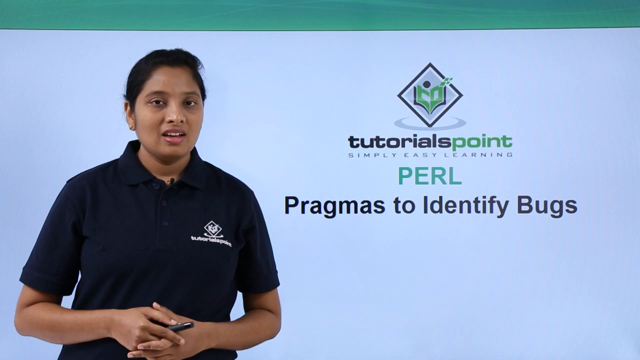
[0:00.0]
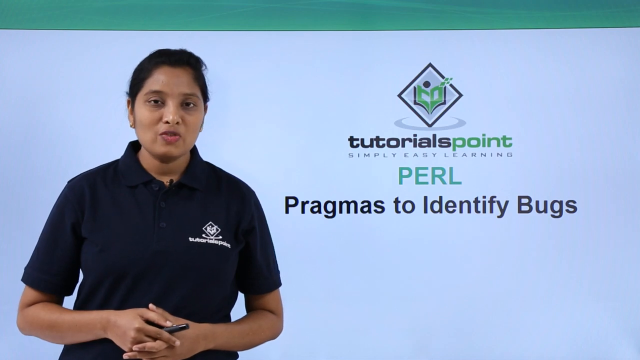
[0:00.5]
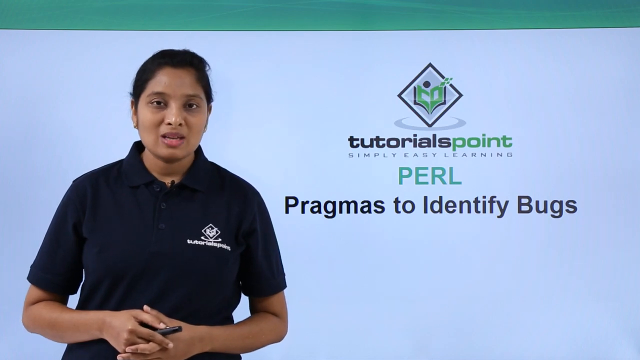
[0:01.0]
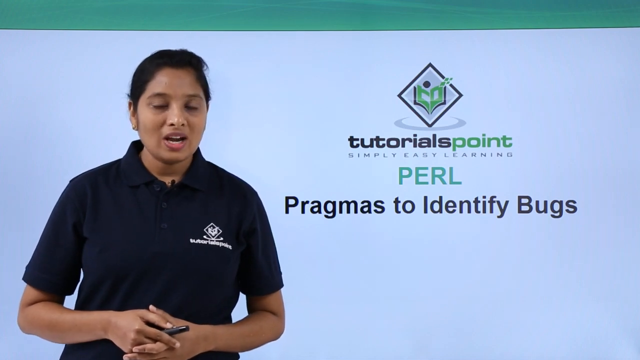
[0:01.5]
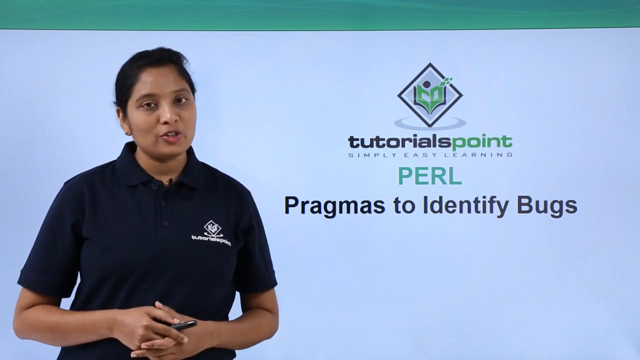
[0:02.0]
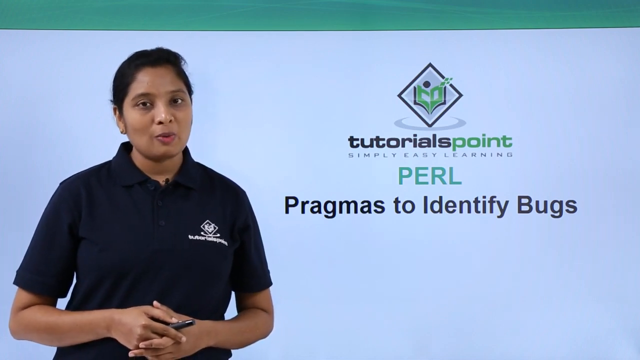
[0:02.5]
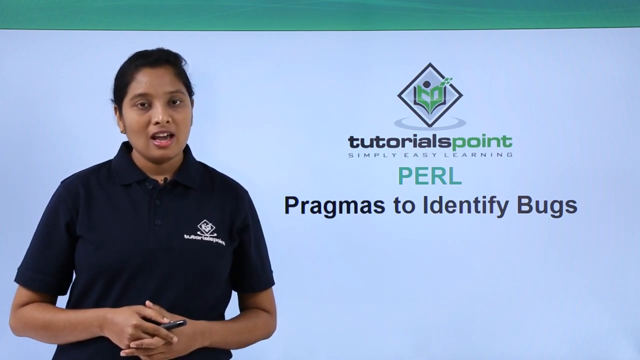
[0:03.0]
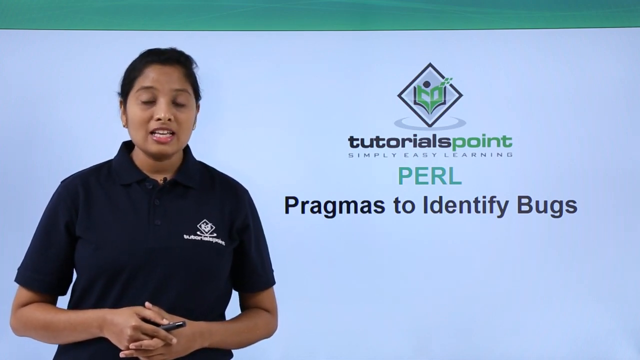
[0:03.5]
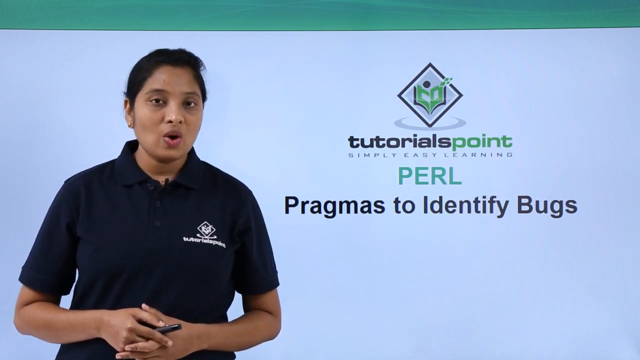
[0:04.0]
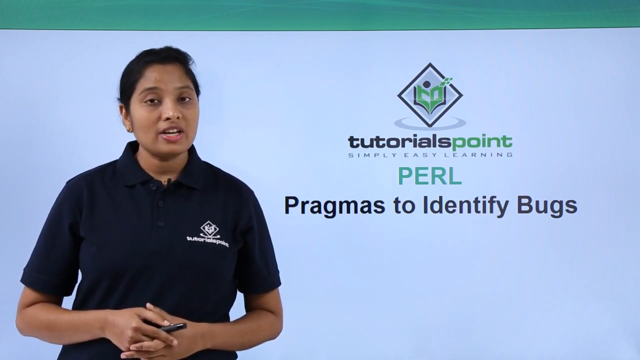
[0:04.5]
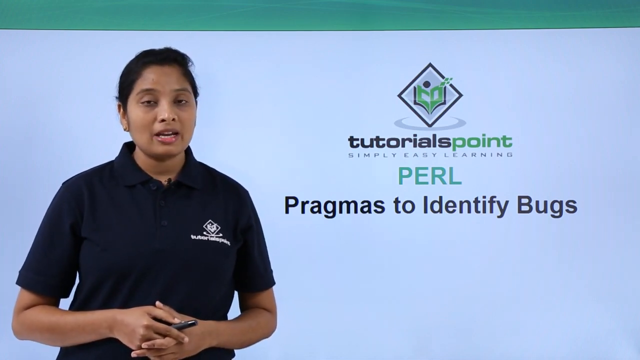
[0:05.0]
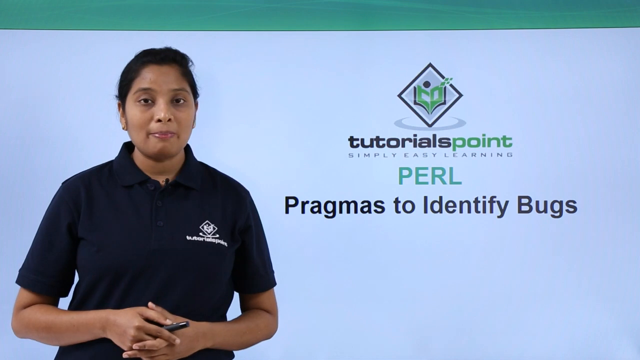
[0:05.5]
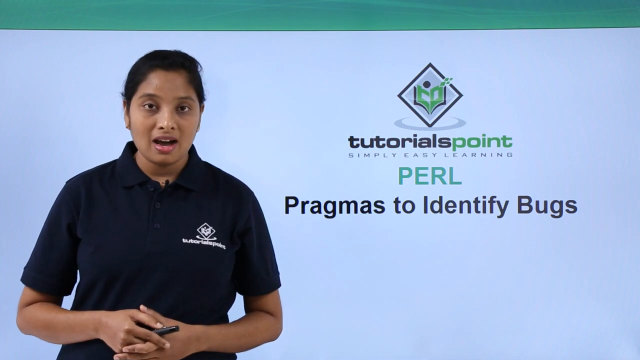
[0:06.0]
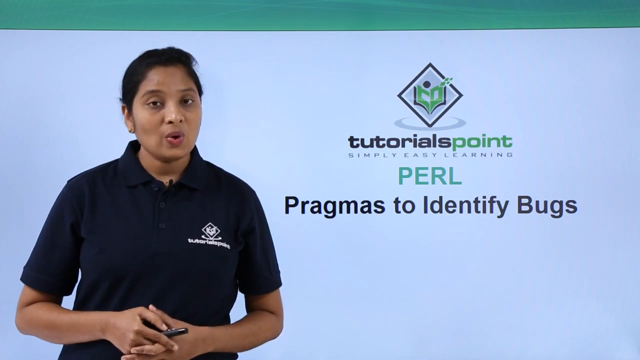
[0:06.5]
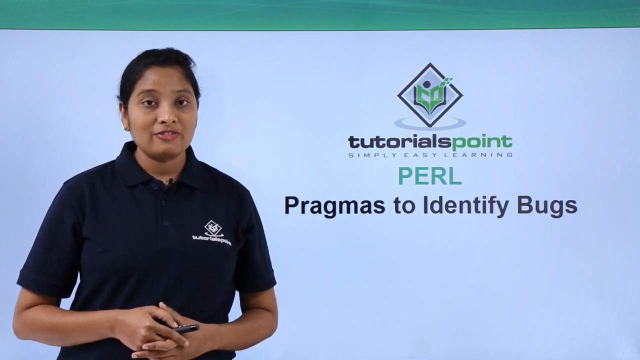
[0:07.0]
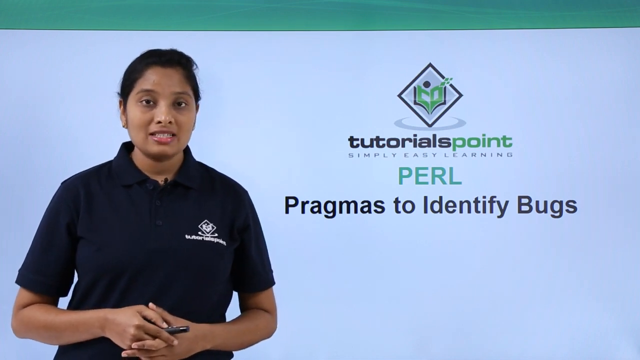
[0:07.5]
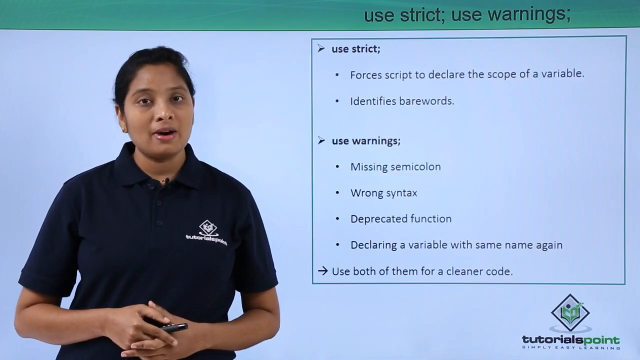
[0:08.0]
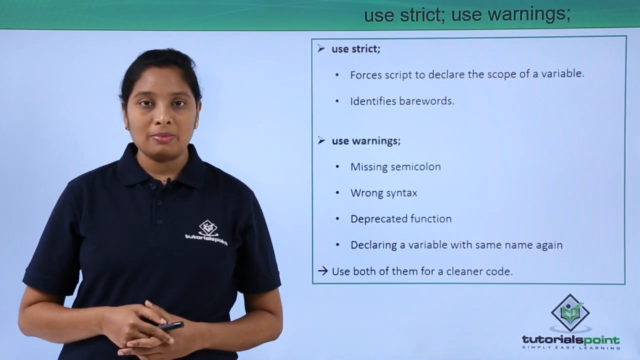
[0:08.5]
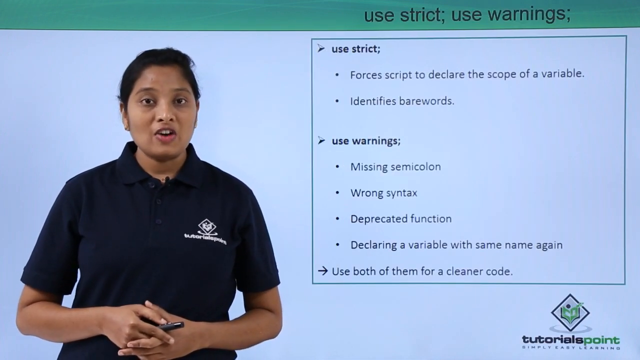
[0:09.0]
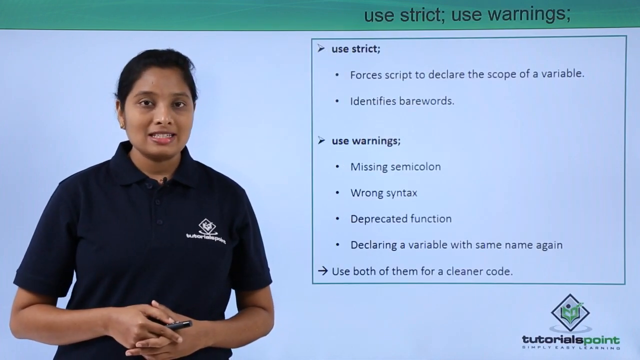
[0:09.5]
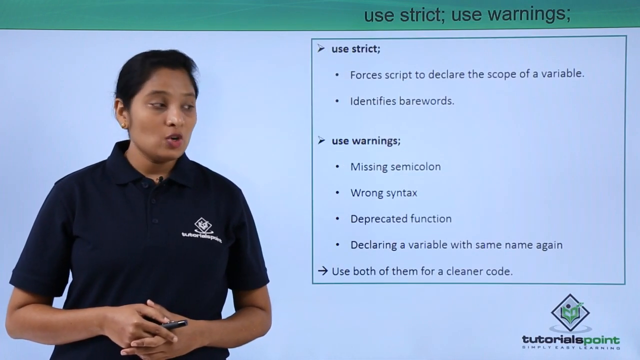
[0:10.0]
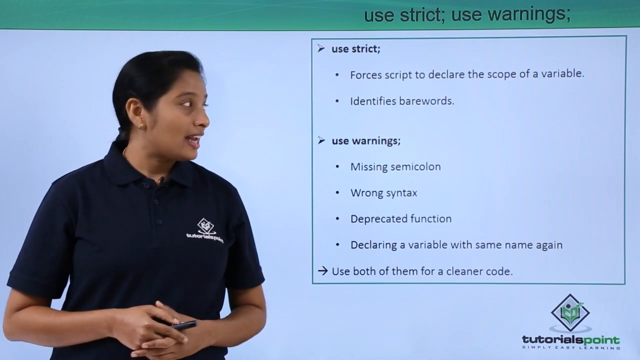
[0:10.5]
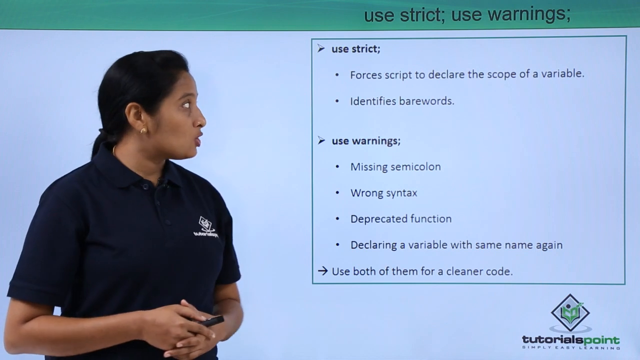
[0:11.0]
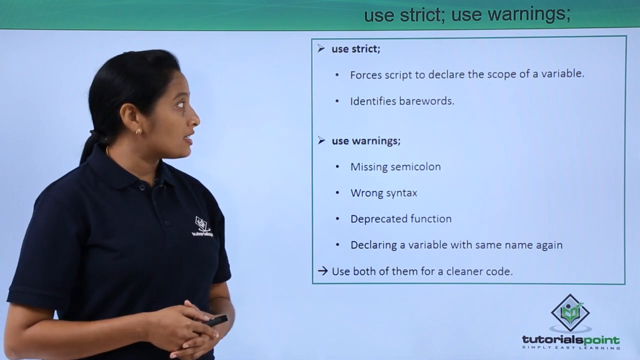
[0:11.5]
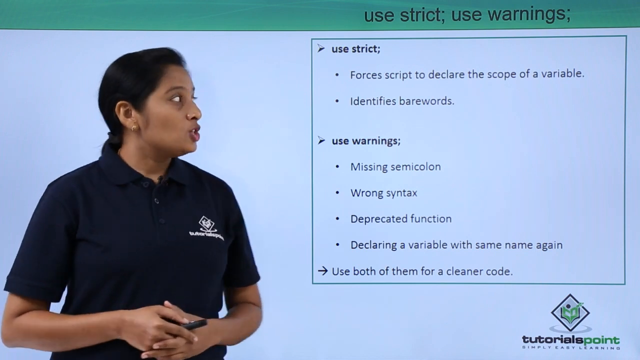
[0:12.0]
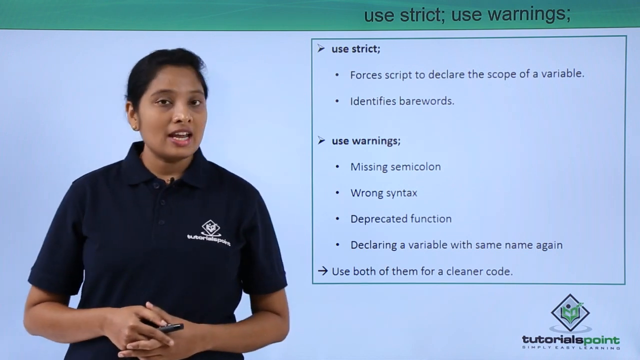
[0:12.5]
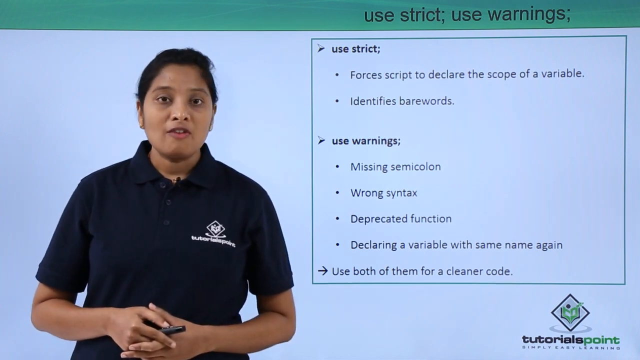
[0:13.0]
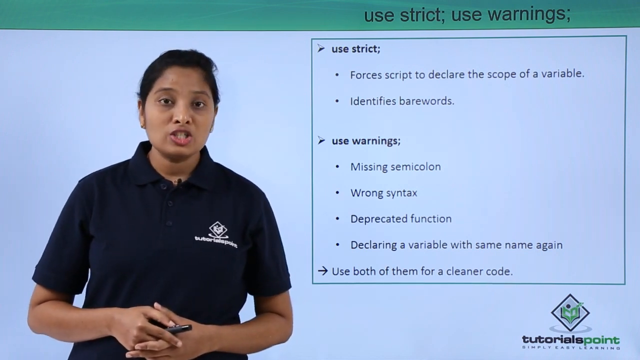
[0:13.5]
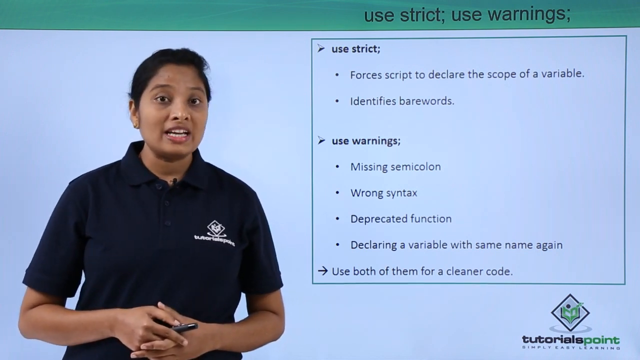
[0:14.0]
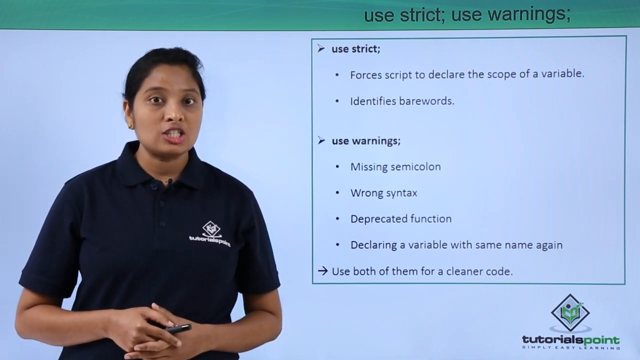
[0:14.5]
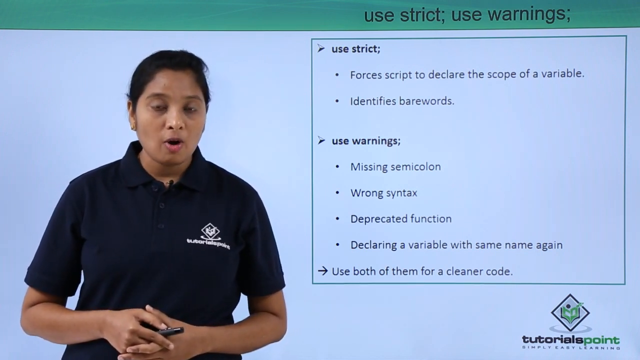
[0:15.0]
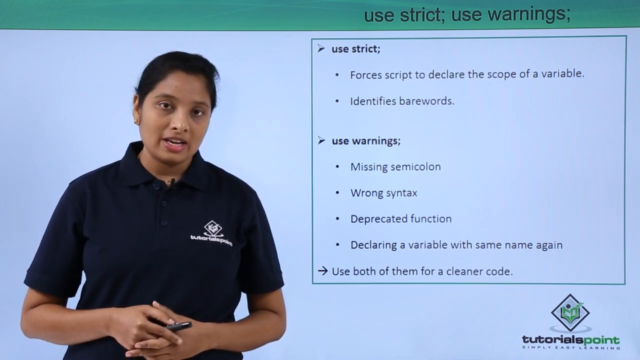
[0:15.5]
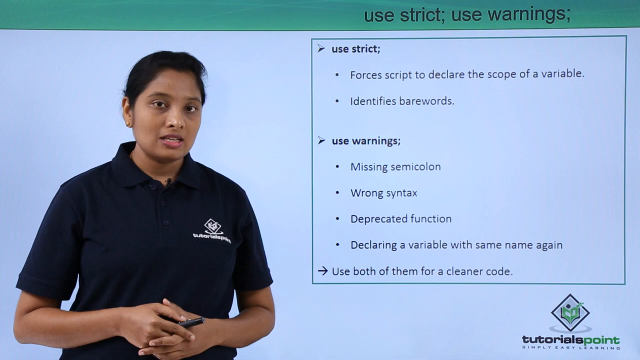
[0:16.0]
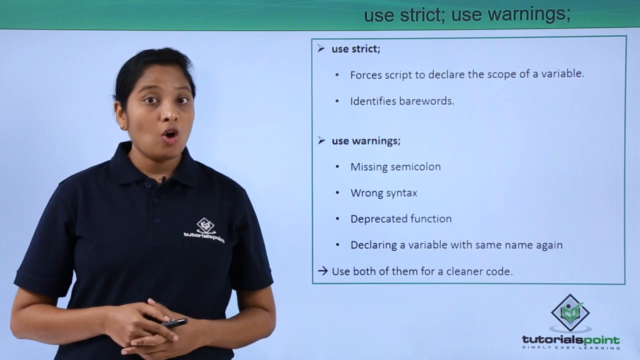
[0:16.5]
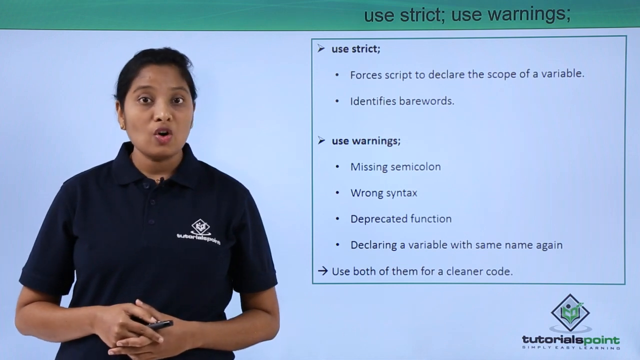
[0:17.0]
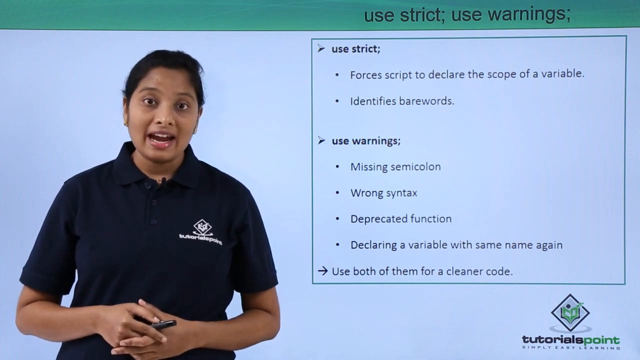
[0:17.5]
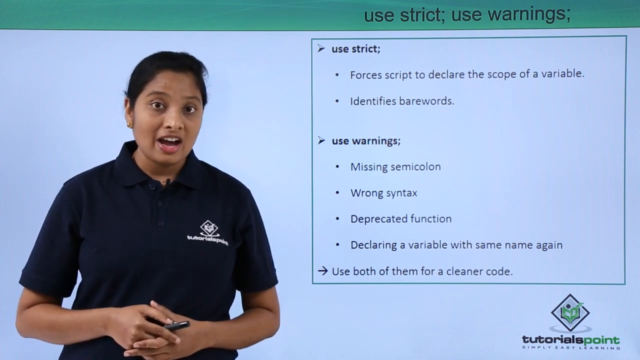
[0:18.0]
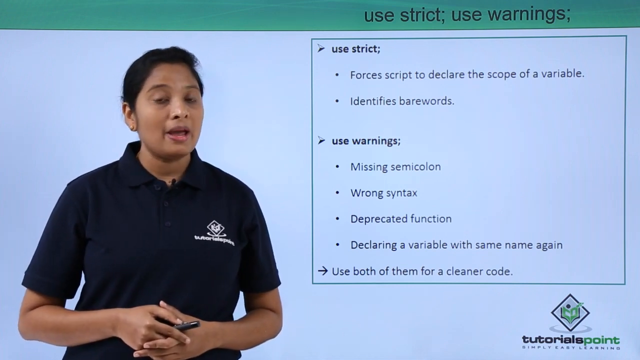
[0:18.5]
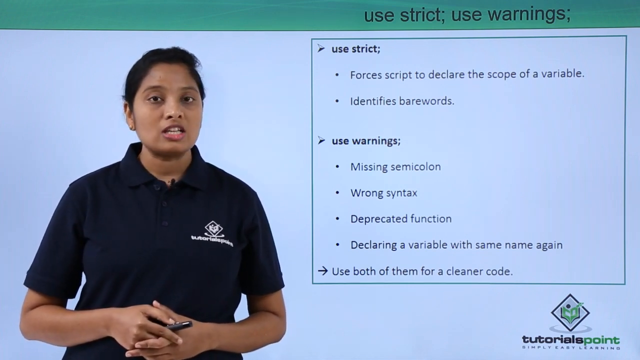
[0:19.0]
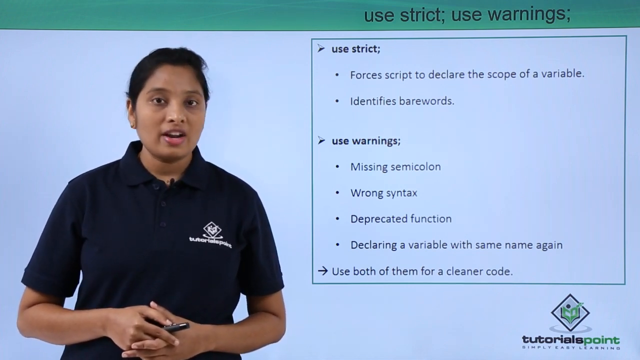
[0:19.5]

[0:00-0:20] Against a light blue background, a woman who works for Tutorials Point appears on the left side of the video. She wears a navy shirt with the Tutorials Point logo in white on the upper left area of the shirt. She speaks to the audience with her fingers laced together in front of her stomach, moving her head to the side as she looks straight ahead into the camera. A pop-up box appears on the right side of the screen, and she turns to her left to look at it. Inside the box are "use strict" and "use warnings". Under "use strict" it reads "forces script to declare the scope of a variable" and "identifies bare words". Under "use warnings" it lists "missing semicolon", "wrong syntax", "deprecated function" and "declaring a variable with the same name again". Beneath these is "use both of them for a cleaner code". She turns back toward the camera, fingers still laced in front of her as she speaks, and then the right side of the screen changes to show "tutorials point pragmas to identify bugs".